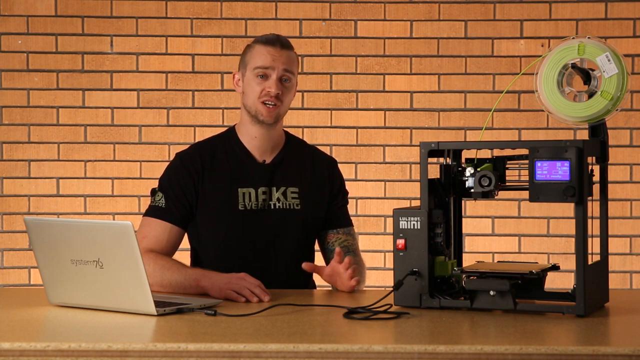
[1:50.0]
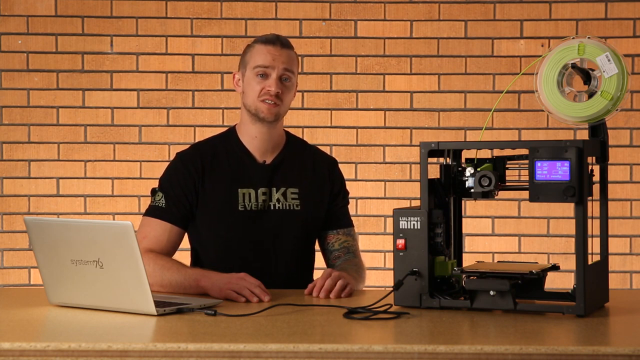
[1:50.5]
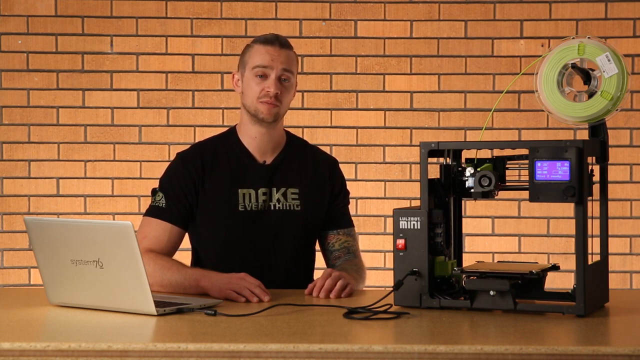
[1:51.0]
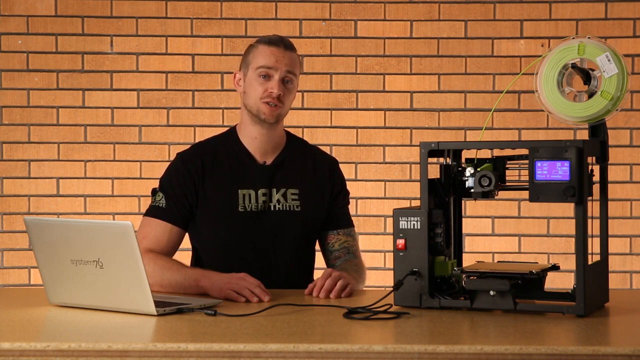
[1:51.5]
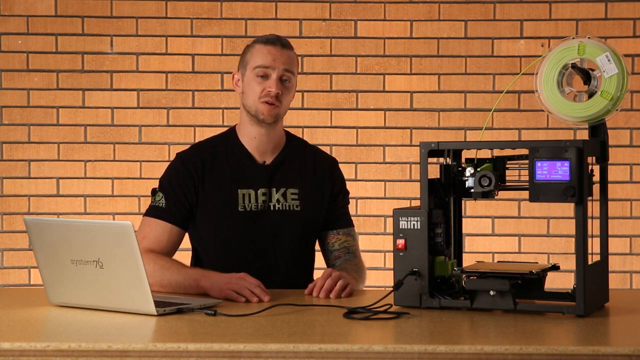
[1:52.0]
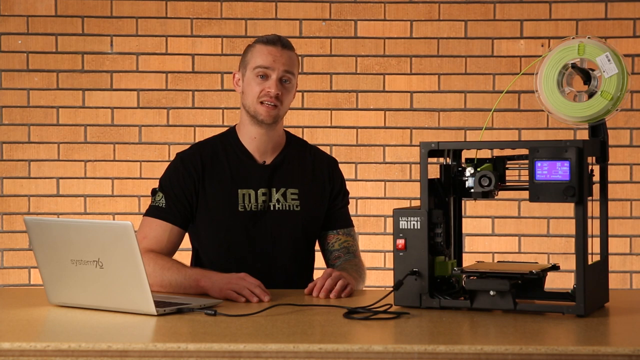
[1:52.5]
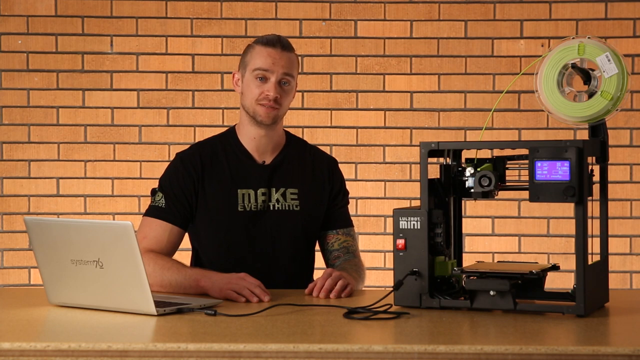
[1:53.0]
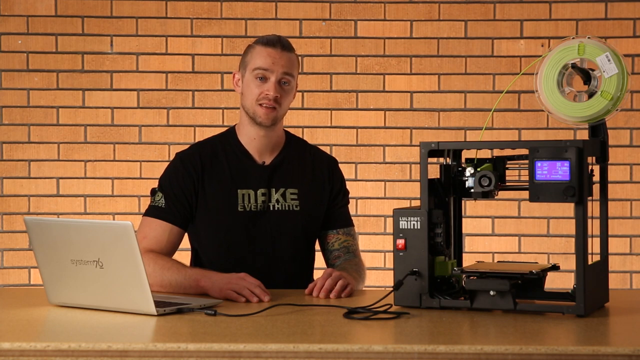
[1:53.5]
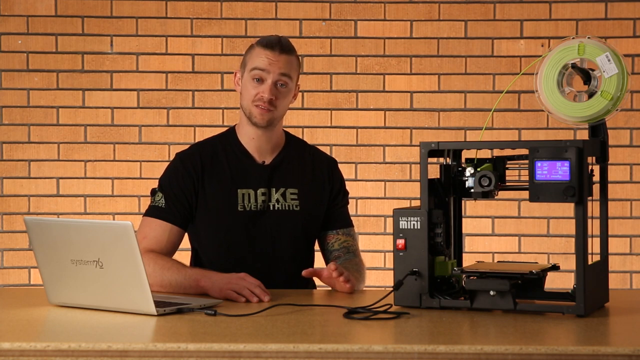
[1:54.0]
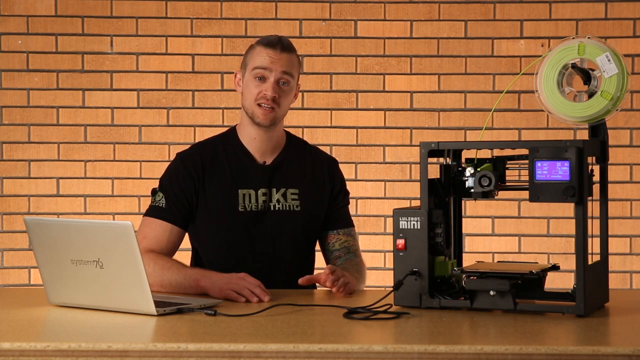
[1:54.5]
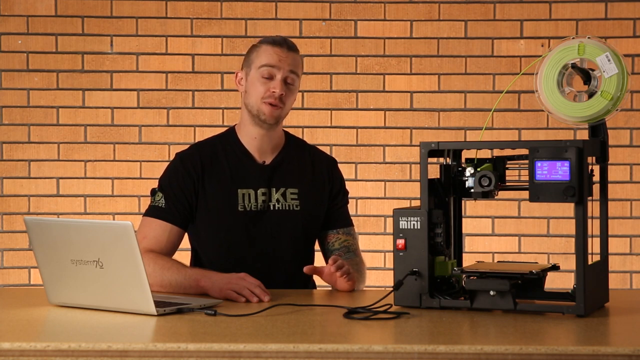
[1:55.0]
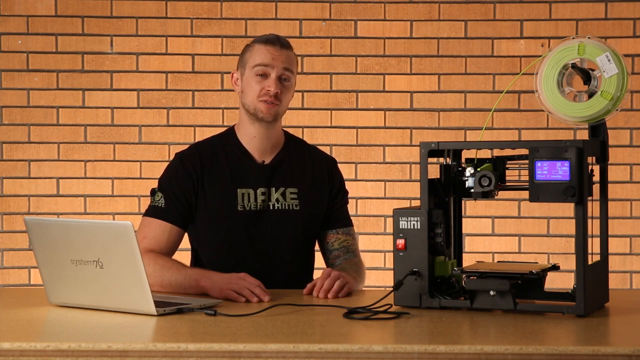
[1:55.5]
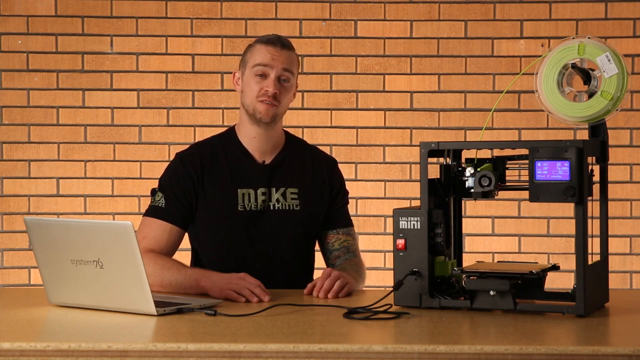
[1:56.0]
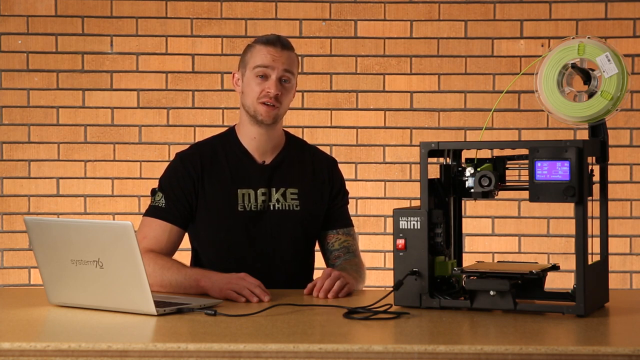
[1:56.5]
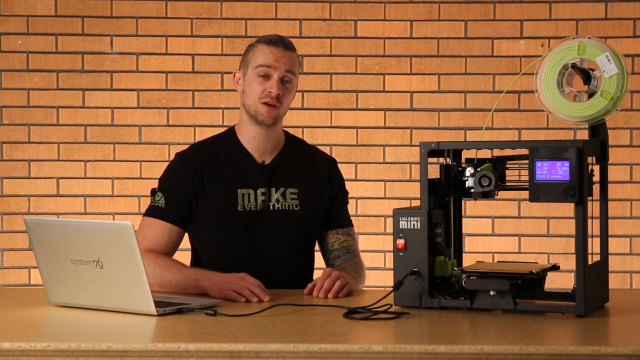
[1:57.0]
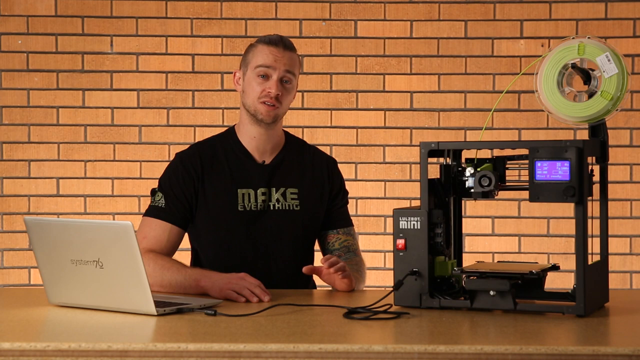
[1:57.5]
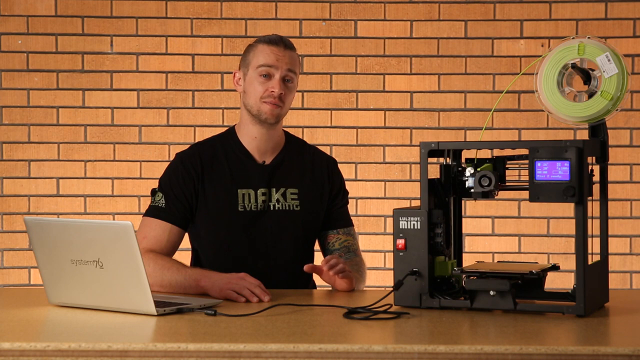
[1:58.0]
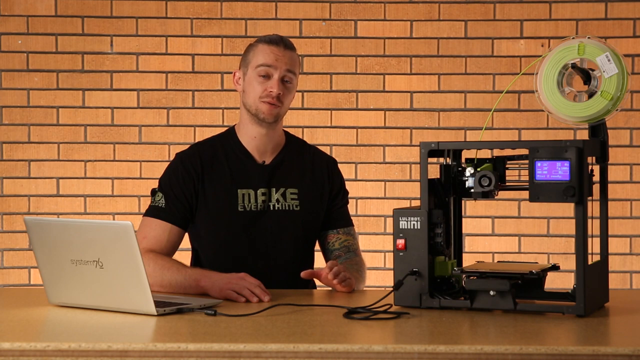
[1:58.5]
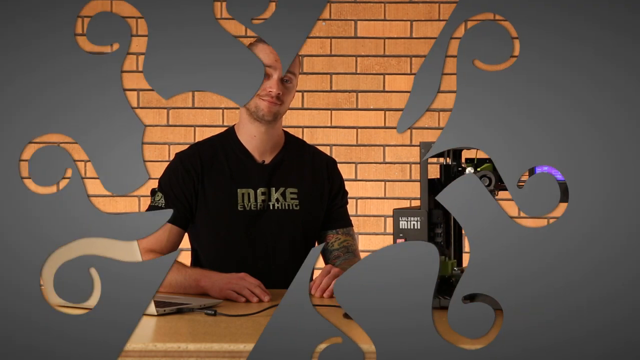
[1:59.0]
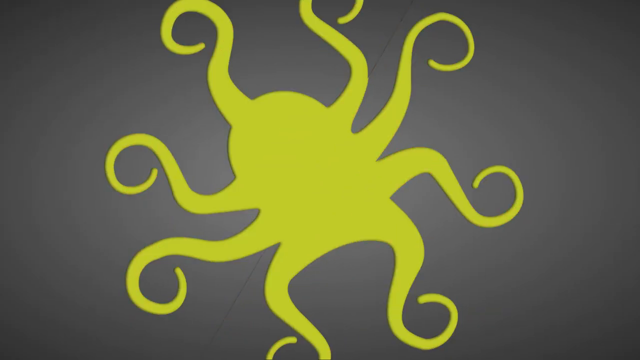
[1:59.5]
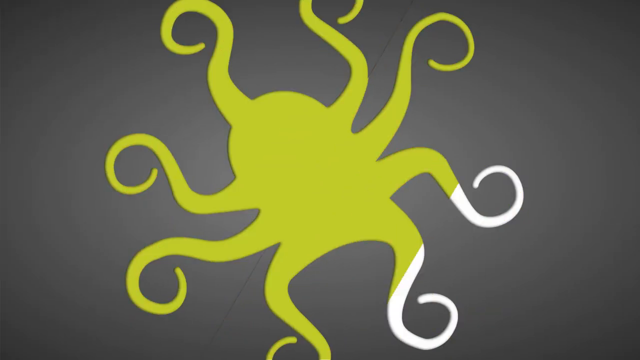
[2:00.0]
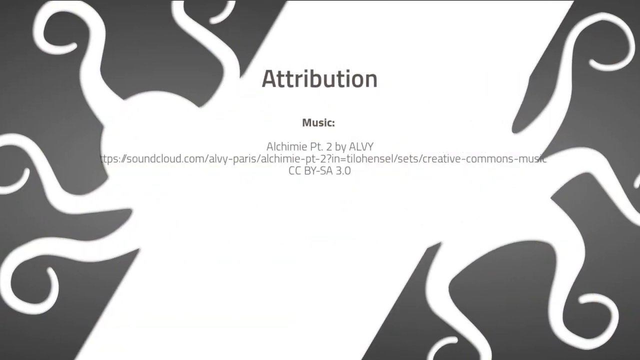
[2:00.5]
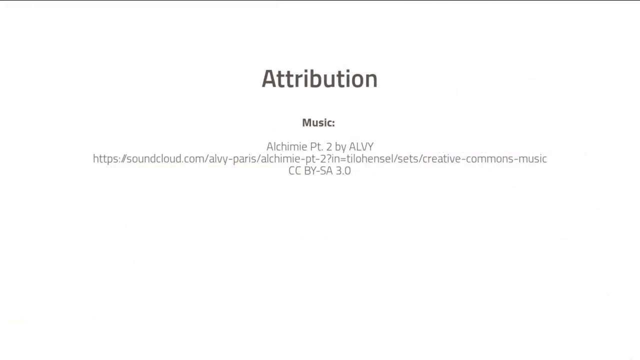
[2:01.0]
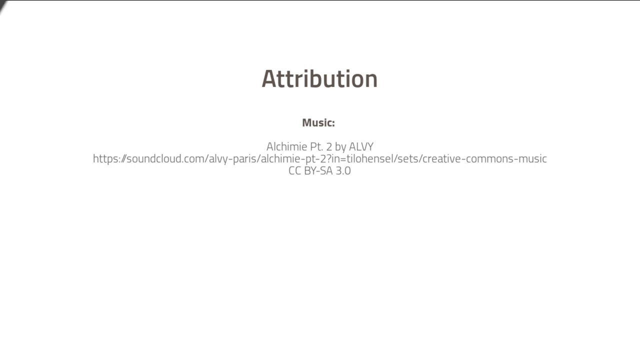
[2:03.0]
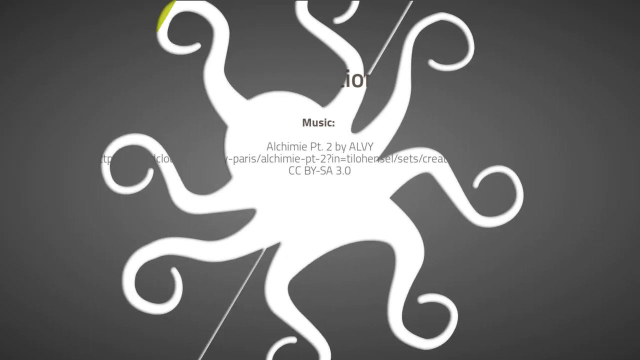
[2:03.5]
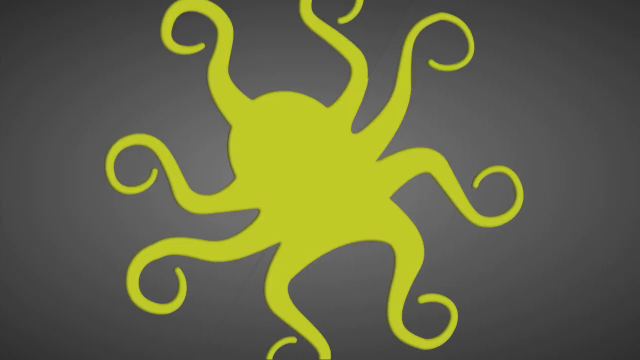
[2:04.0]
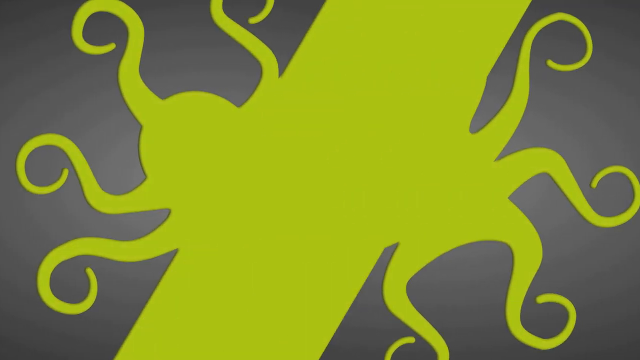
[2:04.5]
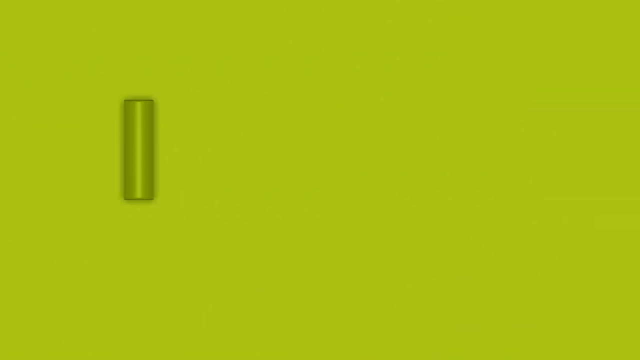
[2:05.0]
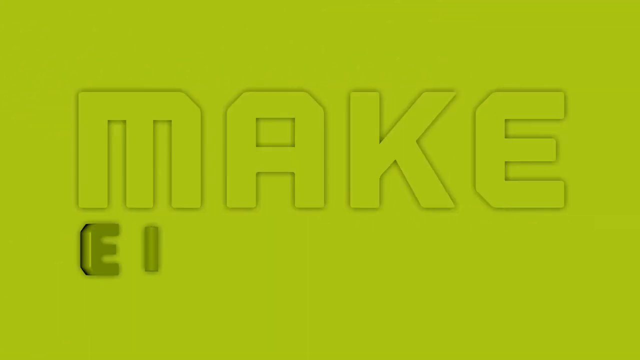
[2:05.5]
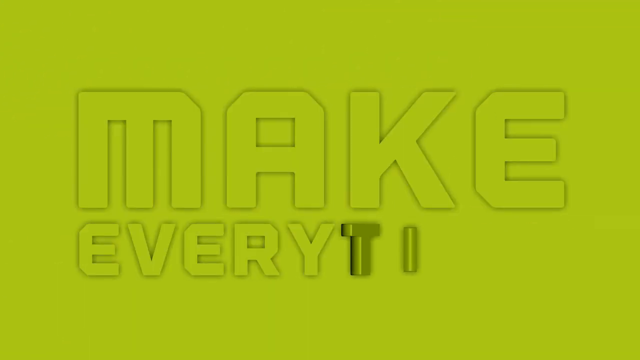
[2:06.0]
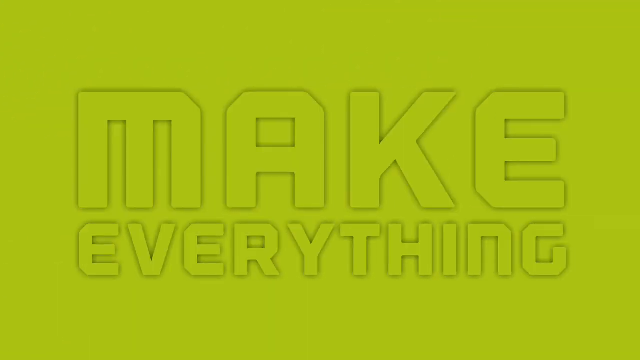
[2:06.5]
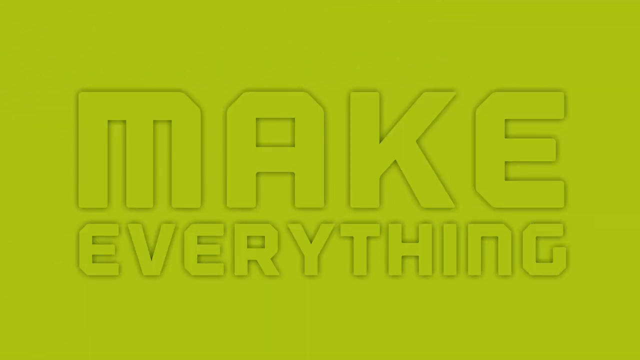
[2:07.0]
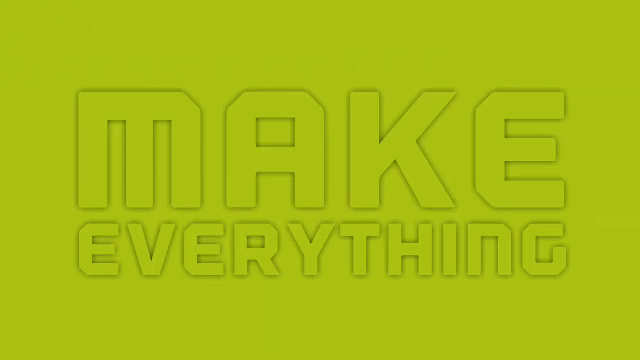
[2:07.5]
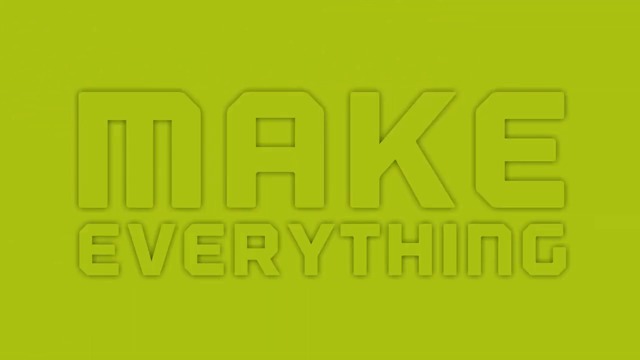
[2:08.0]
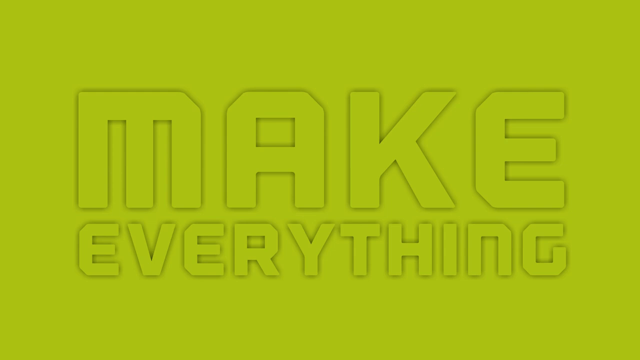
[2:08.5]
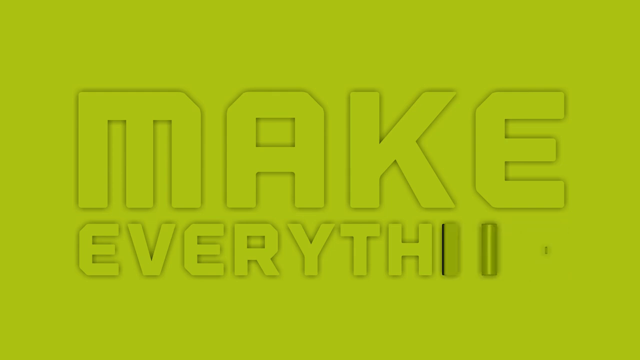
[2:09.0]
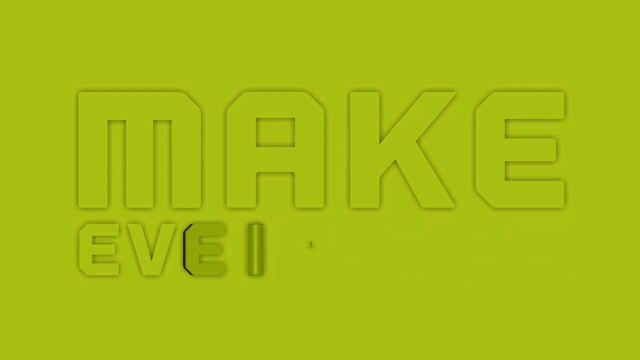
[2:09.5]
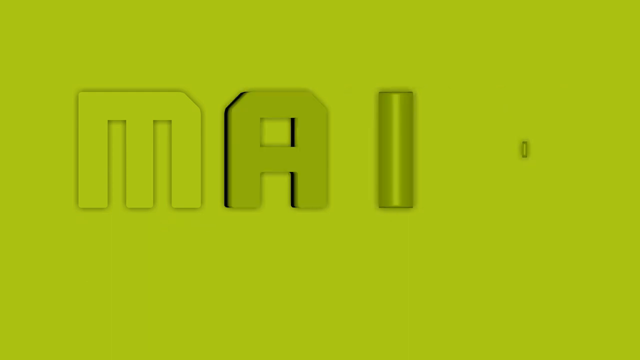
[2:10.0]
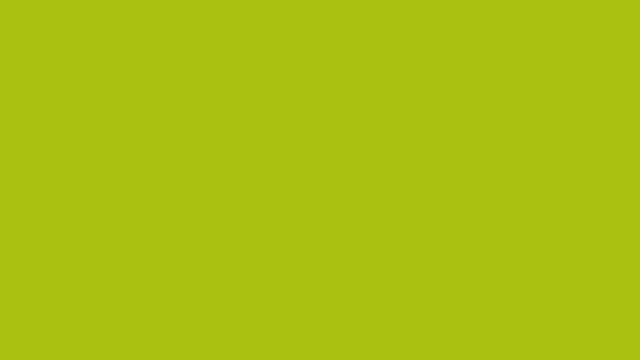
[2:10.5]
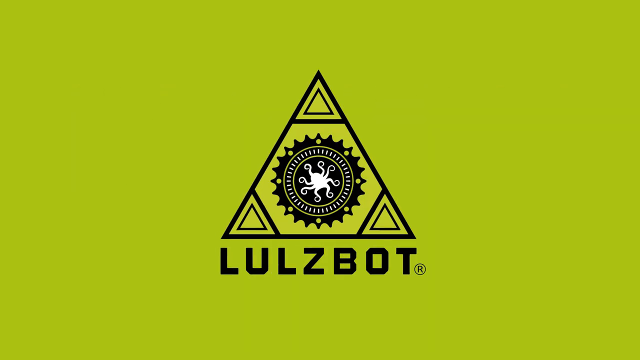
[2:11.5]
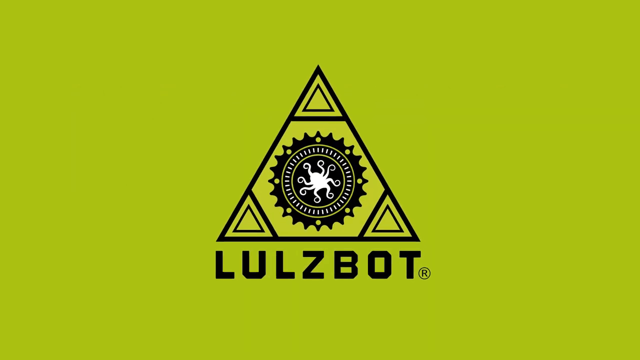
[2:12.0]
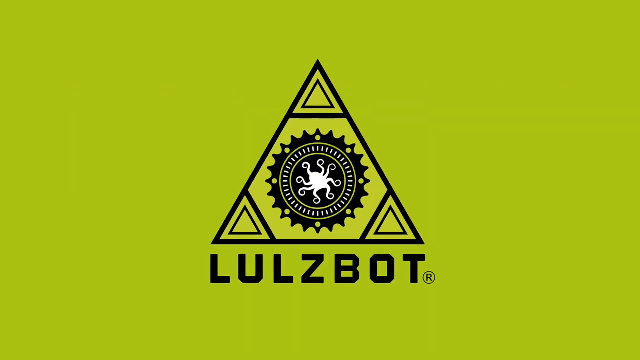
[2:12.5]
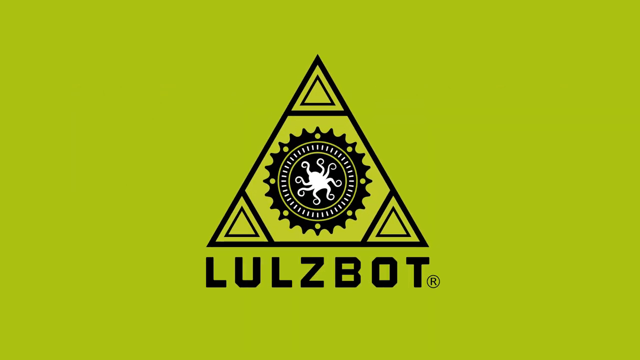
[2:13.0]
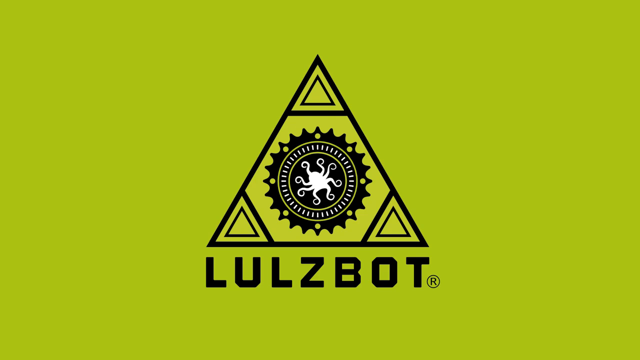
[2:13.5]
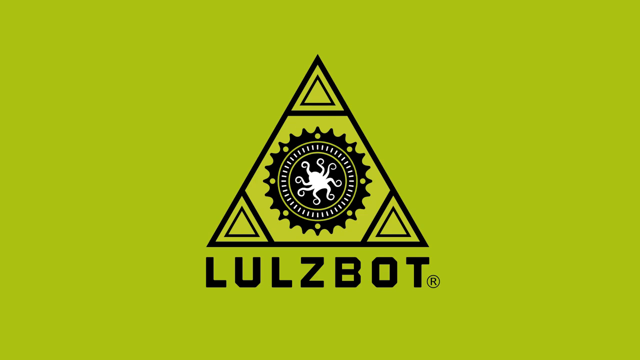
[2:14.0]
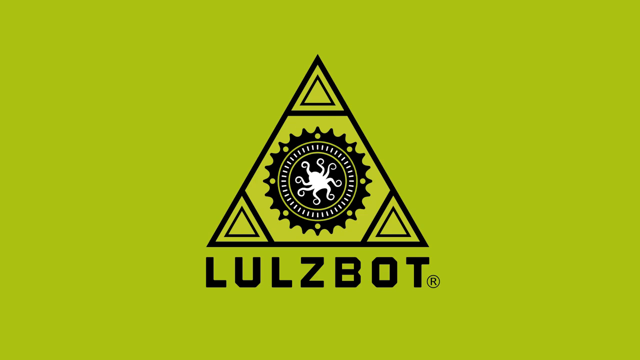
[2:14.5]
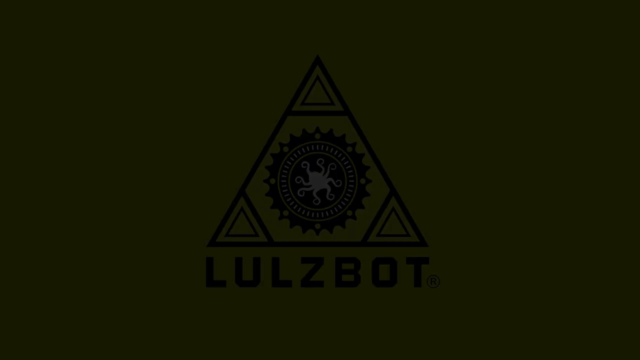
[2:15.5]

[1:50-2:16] The man in the "Make Everything" shirt sits at a desk with the 3D printer to his left and a laptop computer to his right, gesticulating with his hands as he speaks. A shape appears on a gray background: an eight-legged octopus, possibly the symbol for the LulzBot Mini. Text then appears with the heading "attribution", crediting the music "Alchemy Part 2" by Albie, downloadable from SoundCloud at a long URL, and licensed under Creative Commons. The attribution text stays on screen for a while, then is replaced by the green octopus, and the words "make everything" appear in green on a green background, outlined in black. The words disappear and the LulzBot symbol with the octopus at the center appears. The video then fades to black.